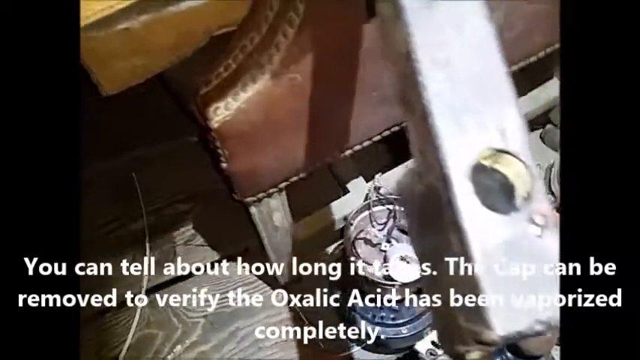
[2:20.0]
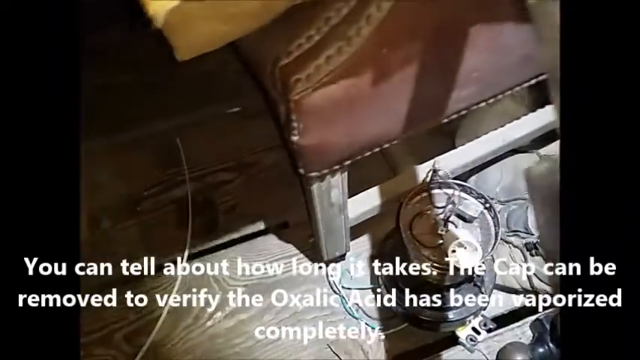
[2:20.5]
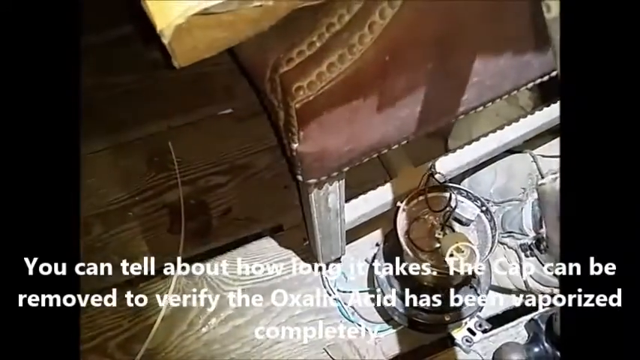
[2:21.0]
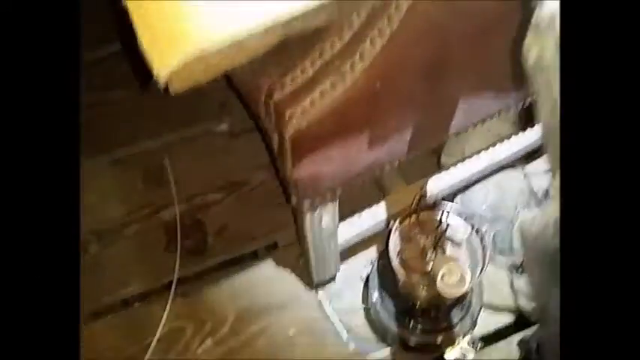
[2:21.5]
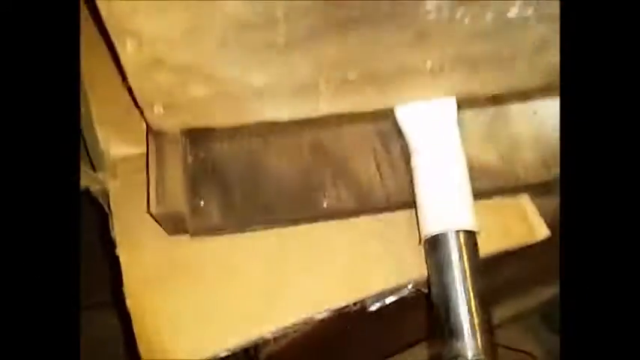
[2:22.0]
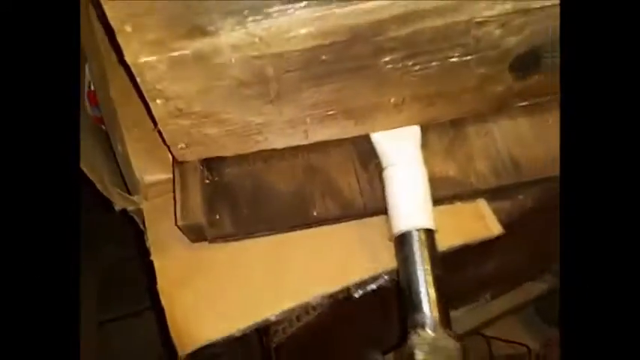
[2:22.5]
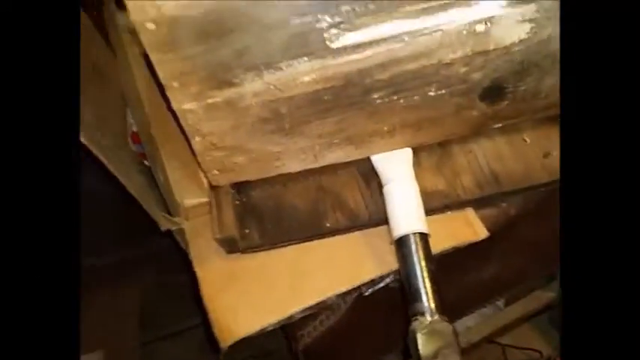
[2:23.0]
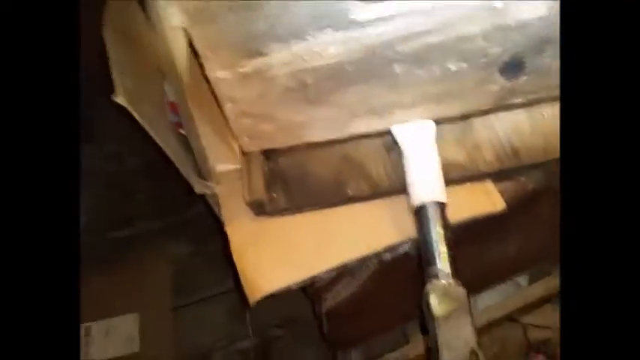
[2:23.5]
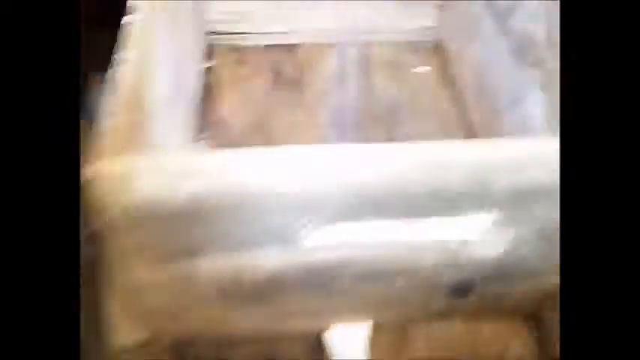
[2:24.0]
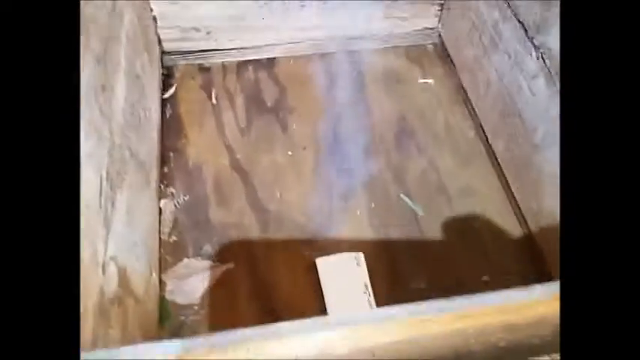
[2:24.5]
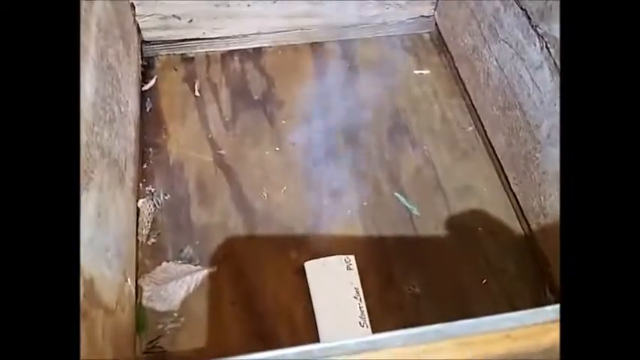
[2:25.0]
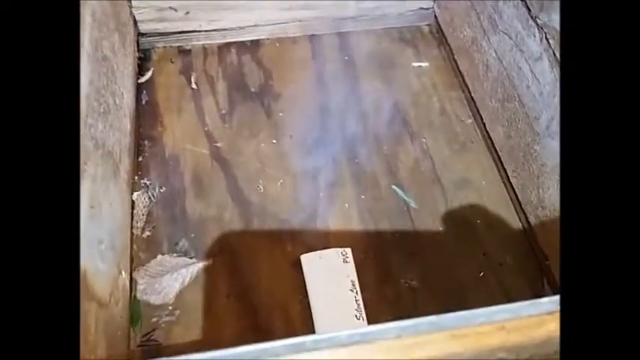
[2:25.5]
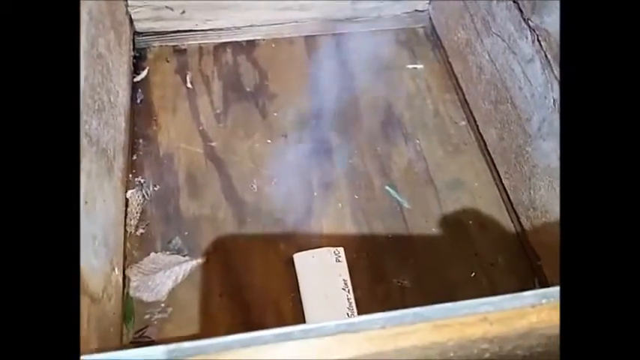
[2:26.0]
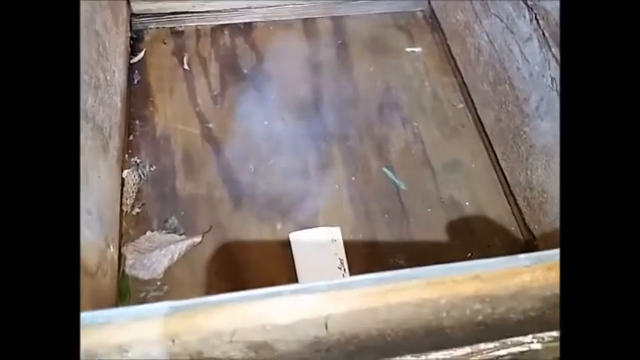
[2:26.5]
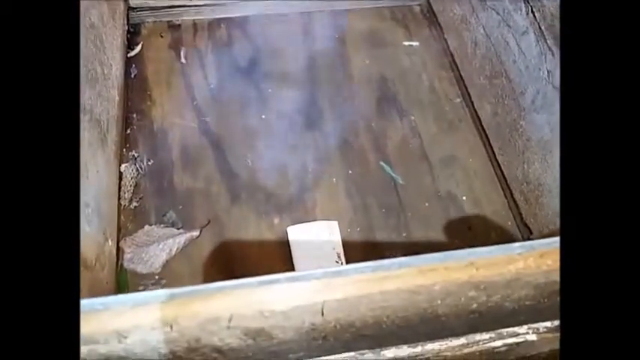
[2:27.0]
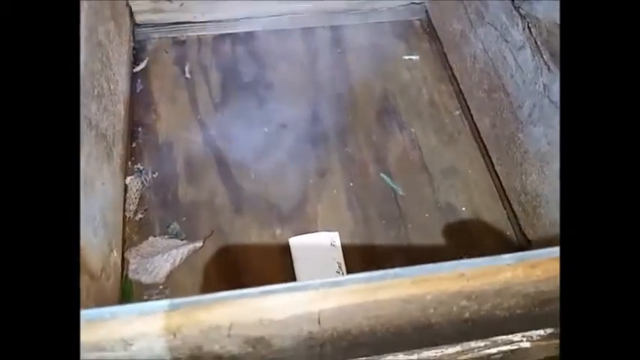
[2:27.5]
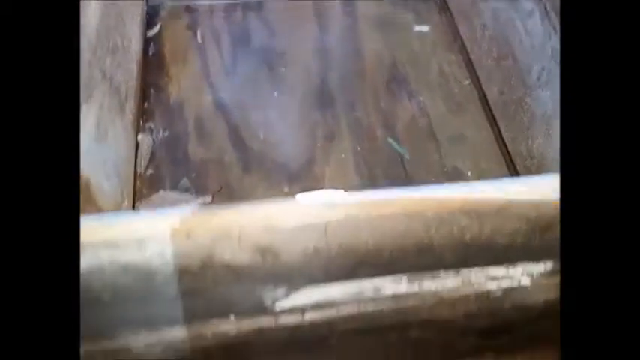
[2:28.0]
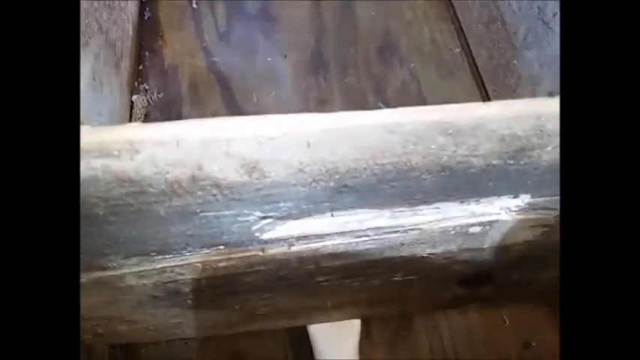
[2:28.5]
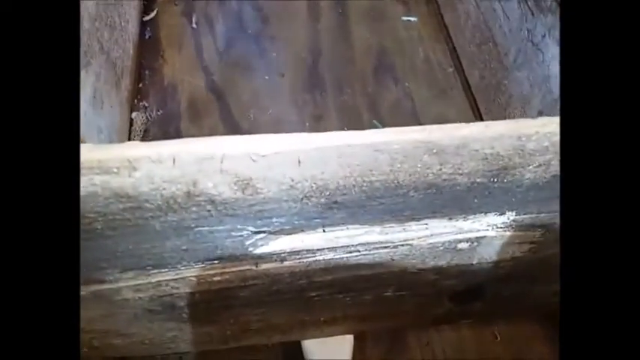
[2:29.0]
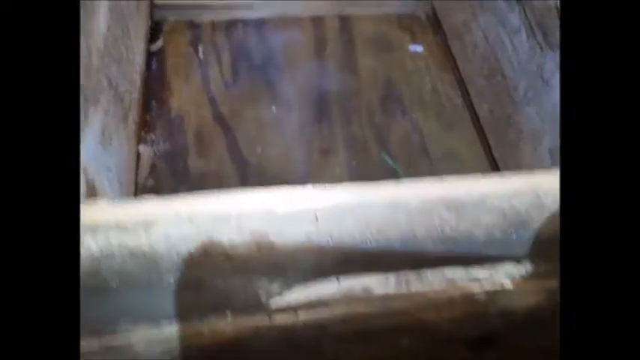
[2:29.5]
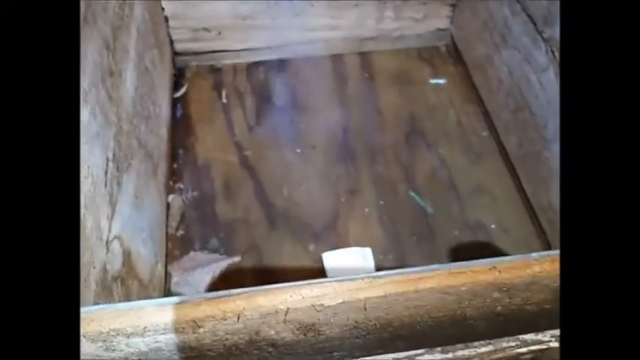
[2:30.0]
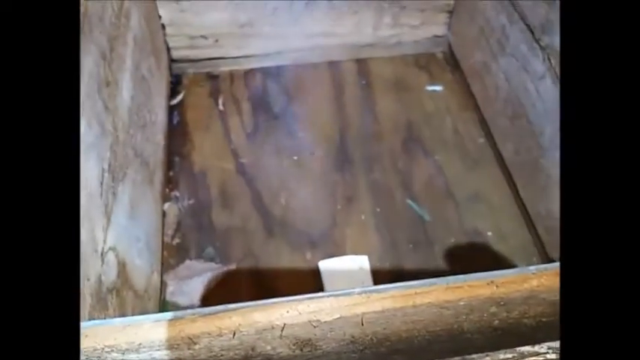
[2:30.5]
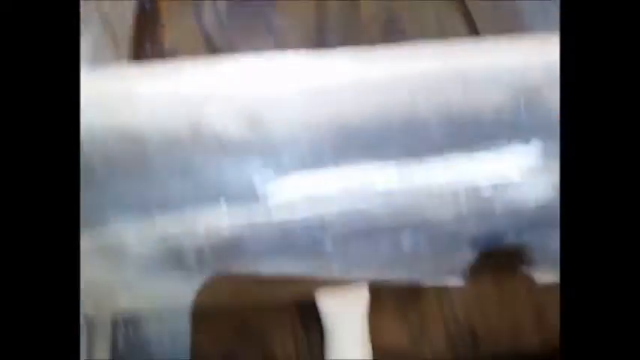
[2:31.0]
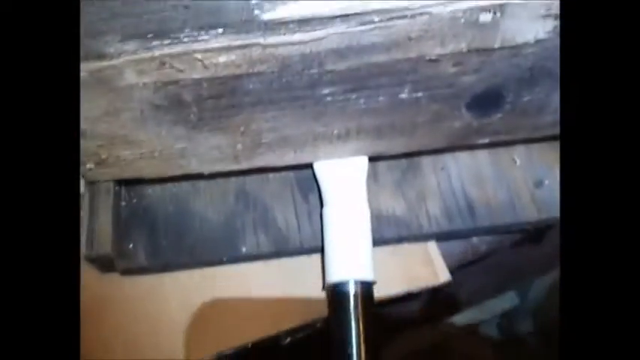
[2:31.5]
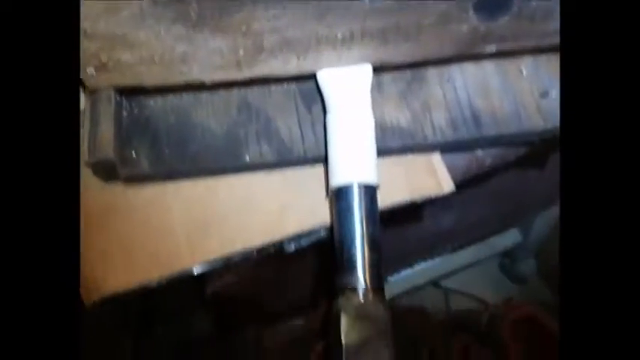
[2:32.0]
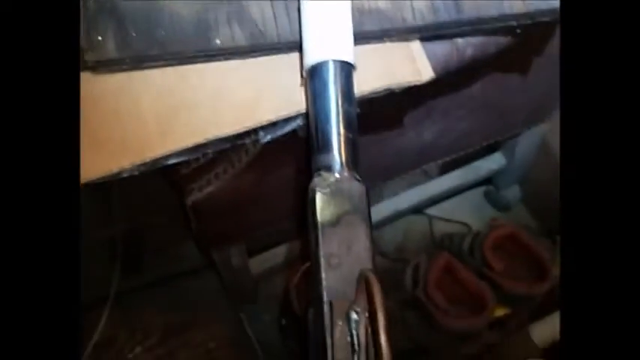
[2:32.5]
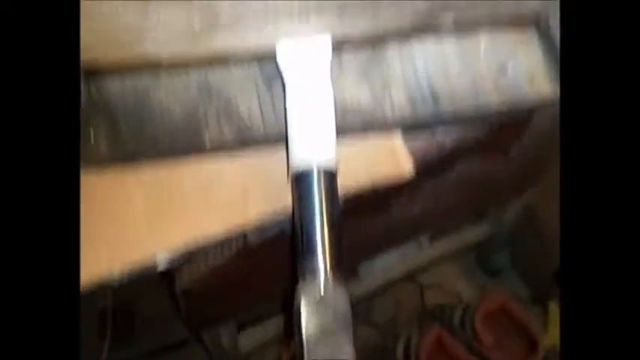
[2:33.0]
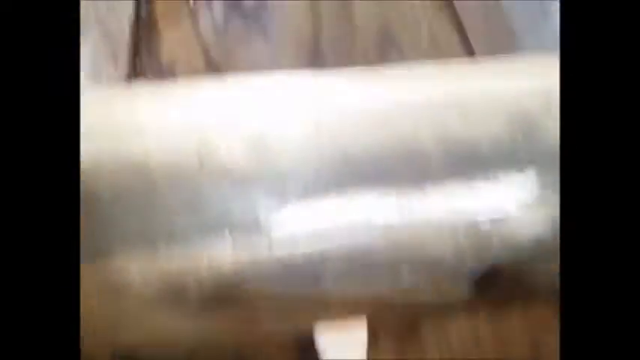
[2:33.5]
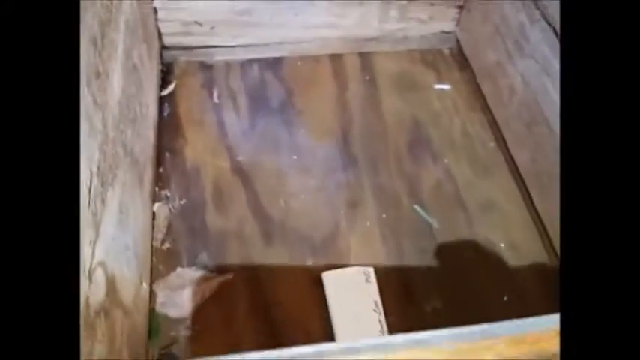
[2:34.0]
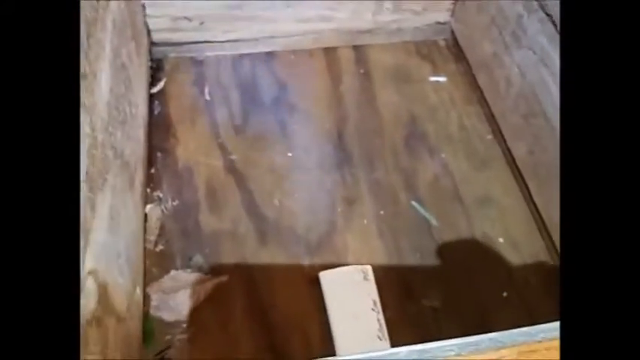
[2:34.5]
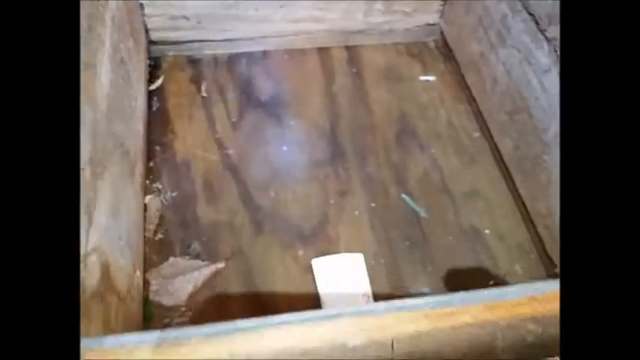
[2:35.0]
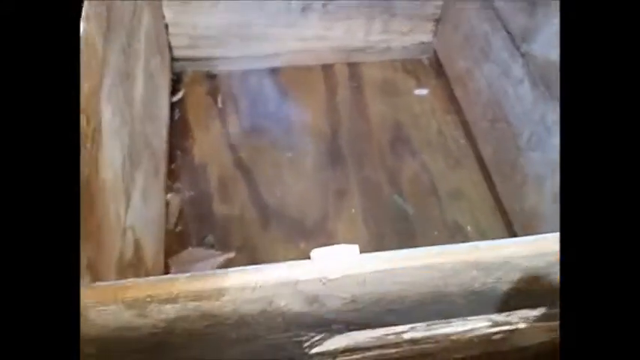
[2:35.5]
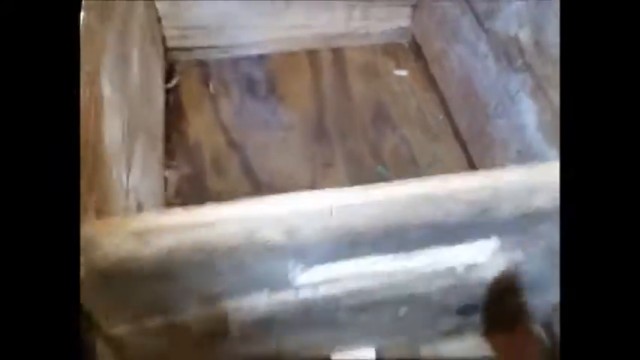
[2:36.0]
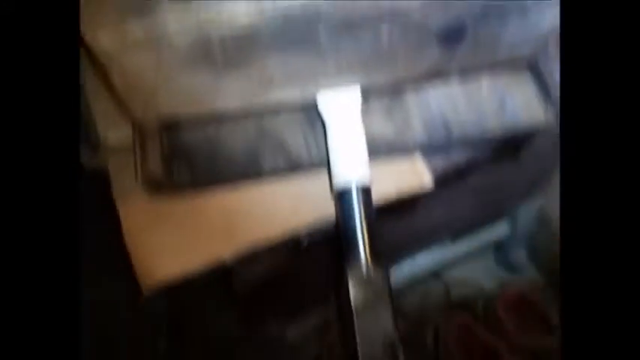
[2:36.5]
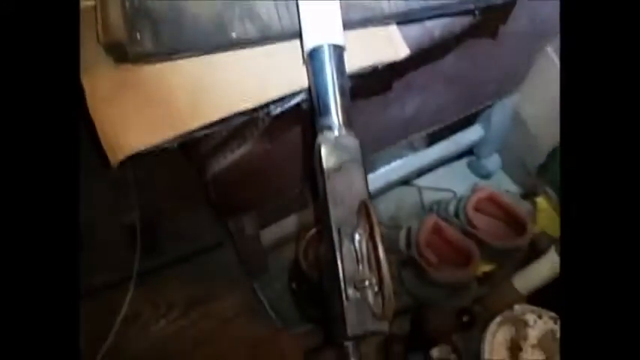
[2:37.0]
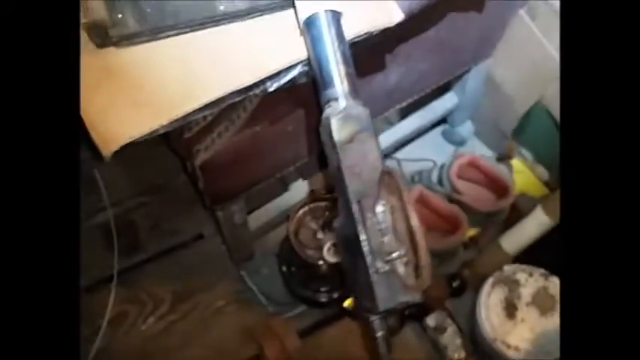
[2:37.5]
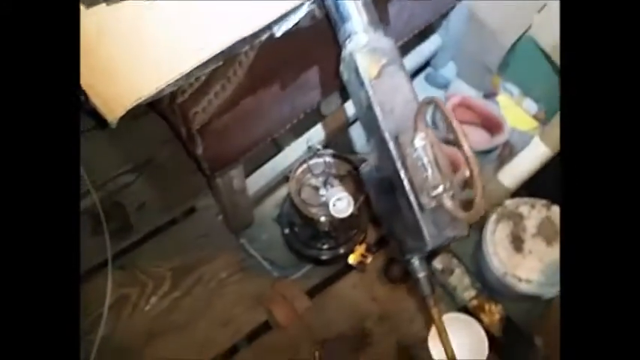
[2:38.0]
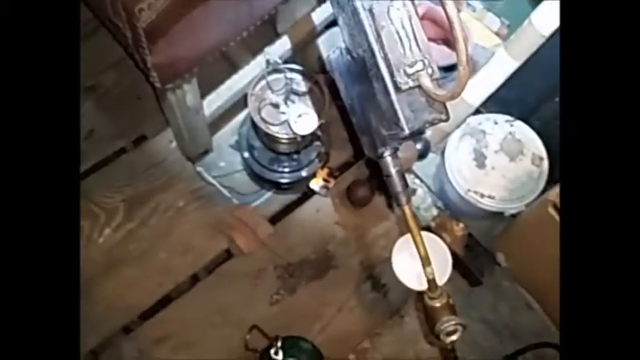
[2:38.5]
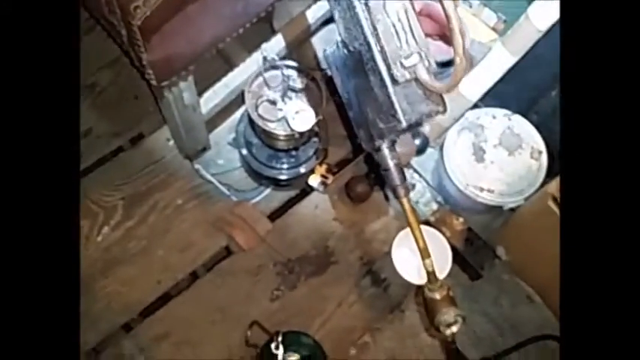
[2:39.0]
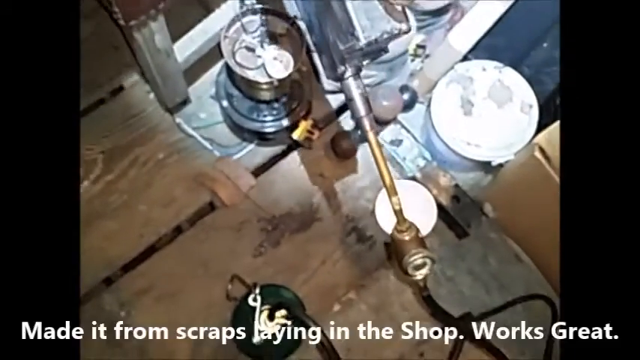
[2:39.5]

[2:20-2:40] The long pipe is shown with the cap taken off, and text reads "you can tell about how long it takes. The cap can be removed to verify the oxalic acid has been vaporized completely." The inside of the box is shown again with the water vapor coming out. The camera goes back and forth, from above the box to the front of the box, and the shadow of the camera is visible, looking like somebody holding a phone as they move it around the contraption. The floor is shown a little. The last subtitles read "Made it from scraps laying in the shop. Works great." The background does not really change.